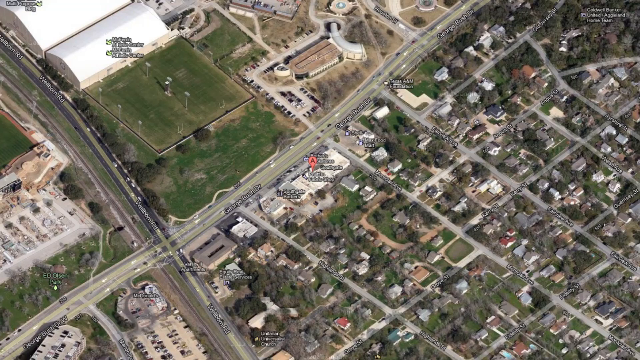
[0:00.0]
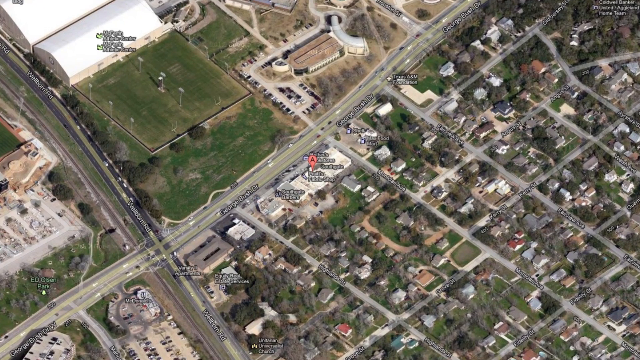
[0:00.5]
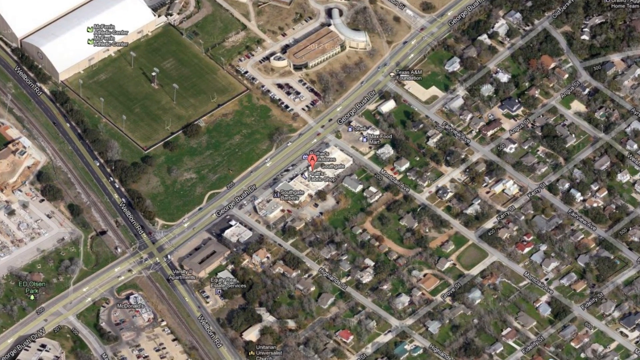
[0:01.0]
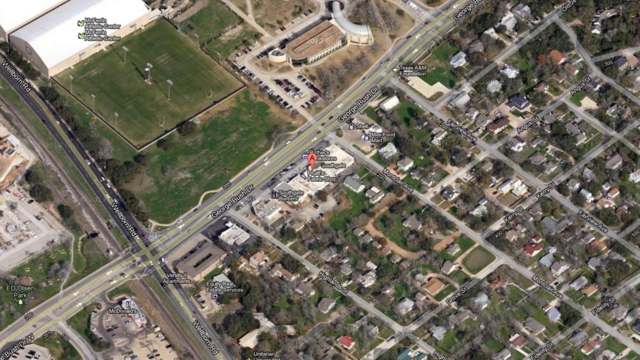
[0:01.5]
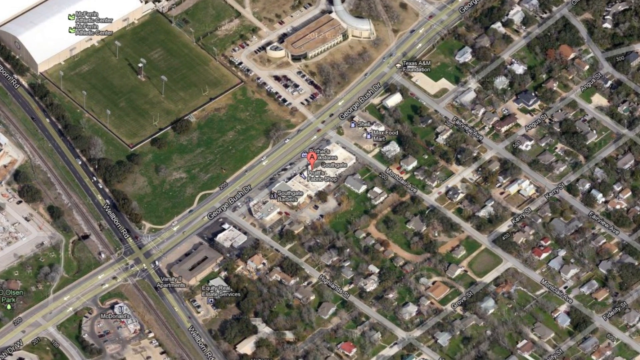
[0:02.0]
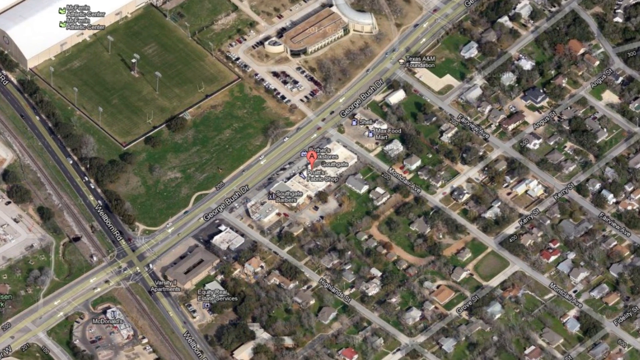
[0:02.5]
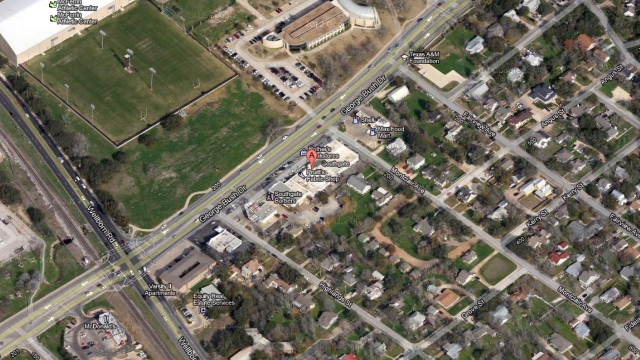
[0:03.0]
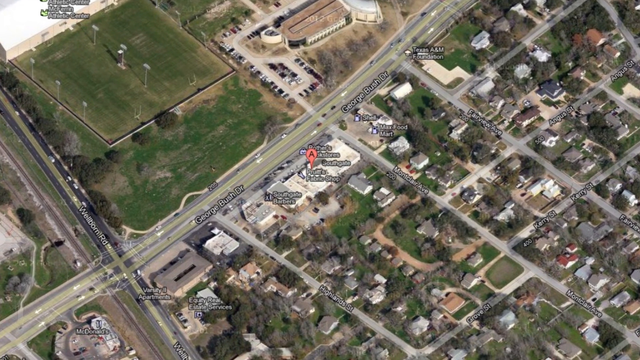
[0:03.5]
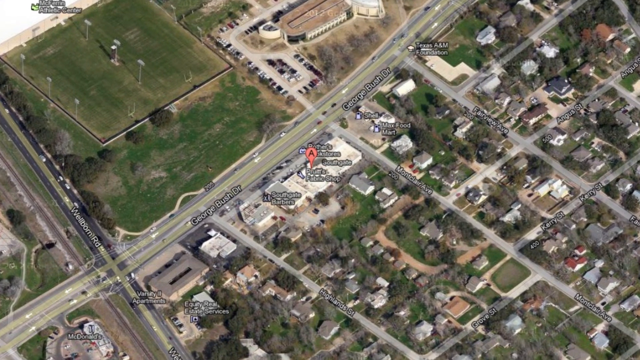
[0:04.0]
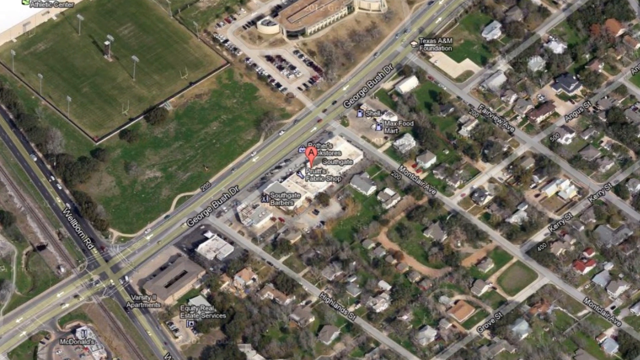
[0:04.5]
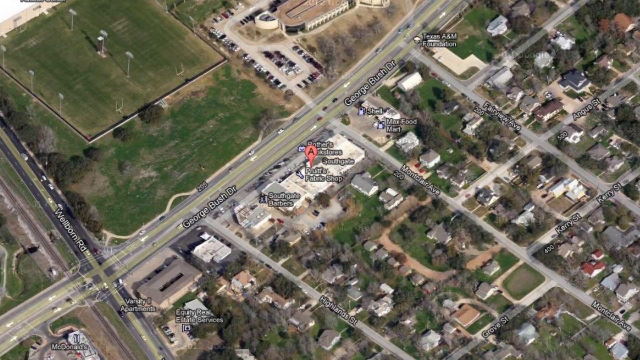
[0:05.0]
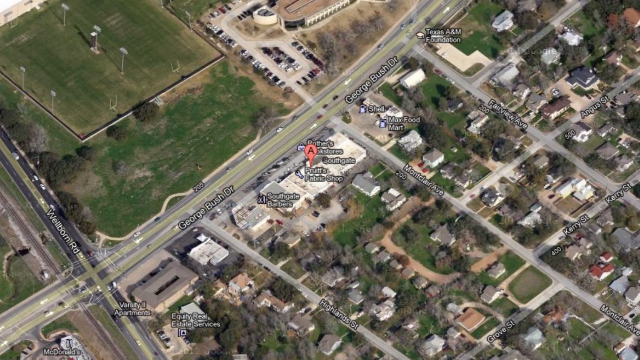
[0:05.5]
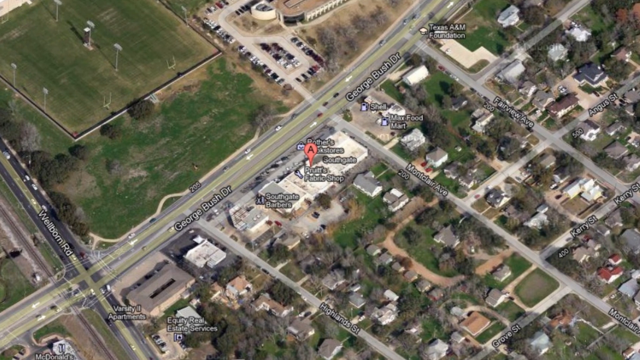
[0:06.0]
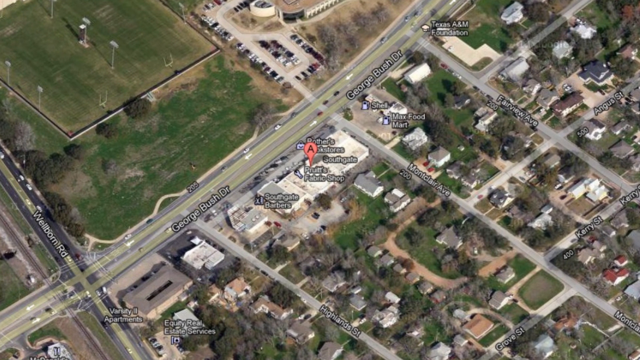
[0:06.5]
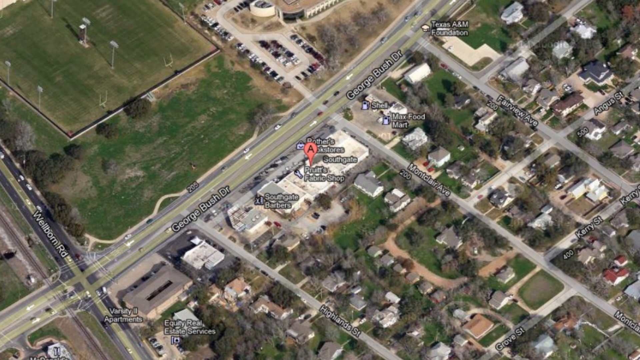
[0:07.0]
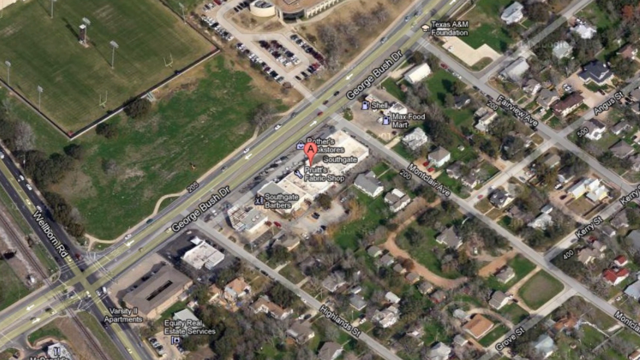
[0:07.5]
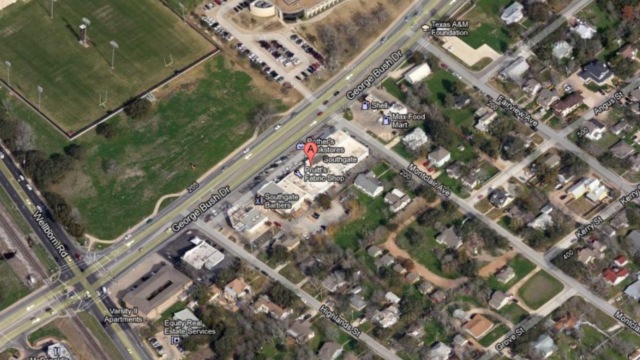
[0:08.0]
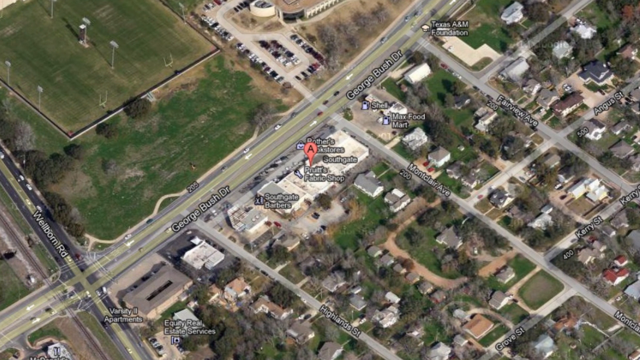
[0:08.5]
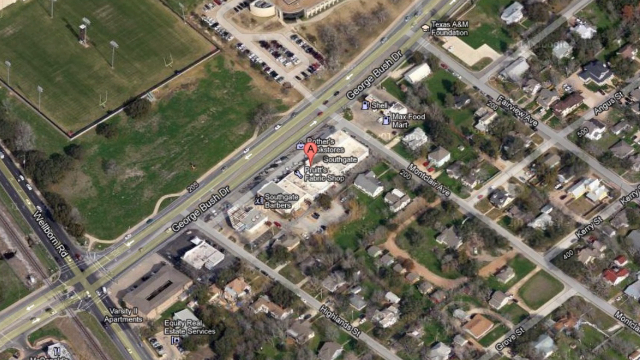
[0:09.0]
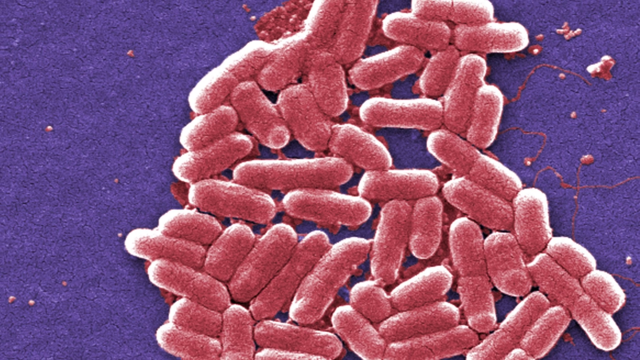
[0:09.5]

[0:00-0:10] A map is shown from a bird's eye view. There are some green fields and a few rather small streets with many buildings located around them, along with the main road, called George Bush Dr. One of the buildings next to this main road, which has a white roof, is marked with a red pin with the letter A on it. The map very slowly zooms in, as if getting closer to the building with the pin. After a while, some red particles, probably bacteria, appear in the middle of the screen on a purple background.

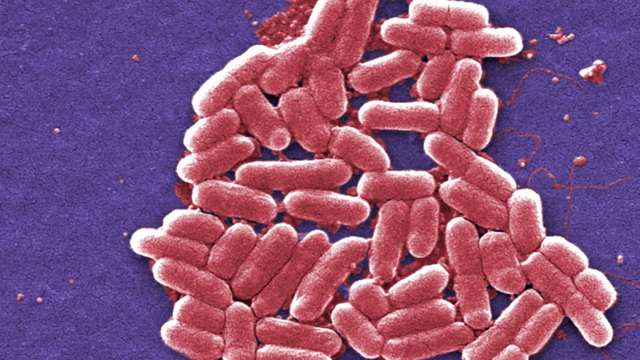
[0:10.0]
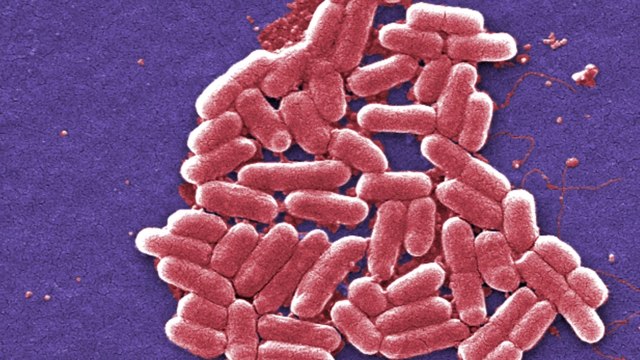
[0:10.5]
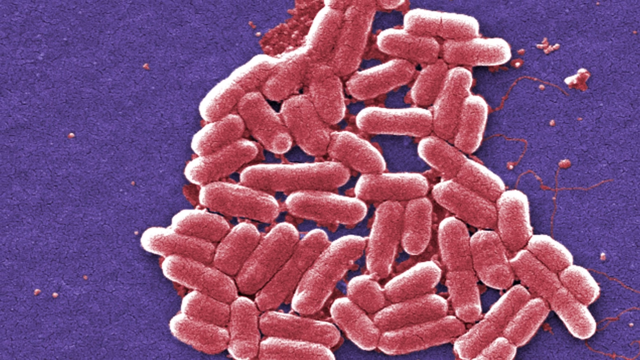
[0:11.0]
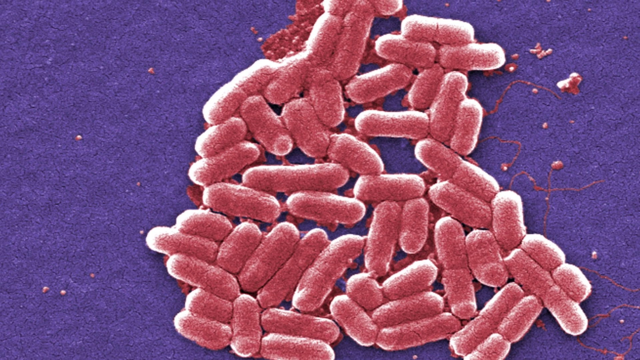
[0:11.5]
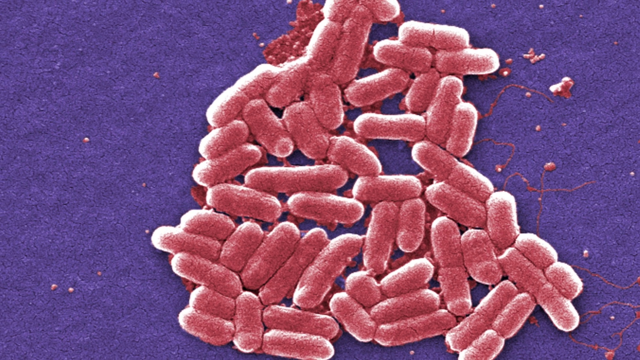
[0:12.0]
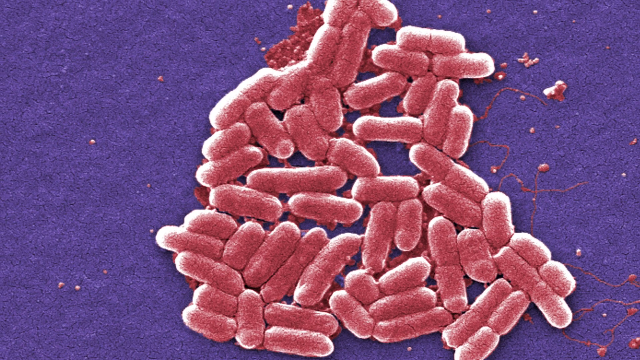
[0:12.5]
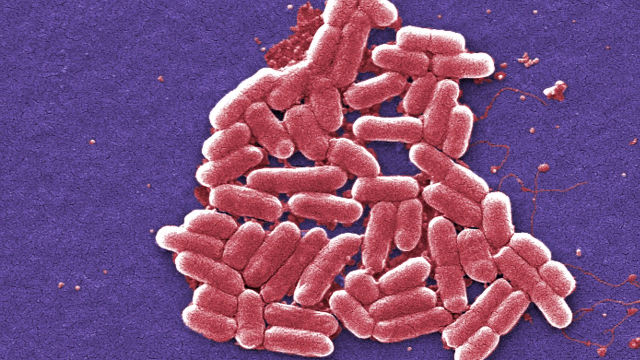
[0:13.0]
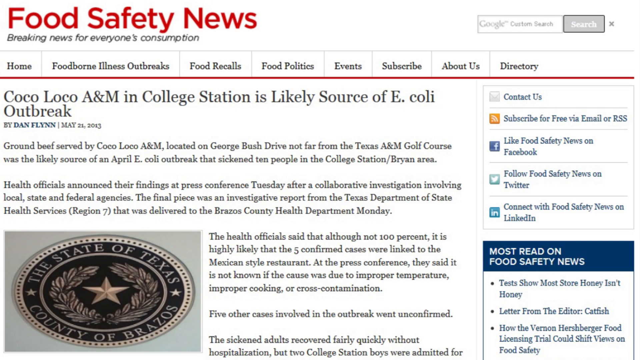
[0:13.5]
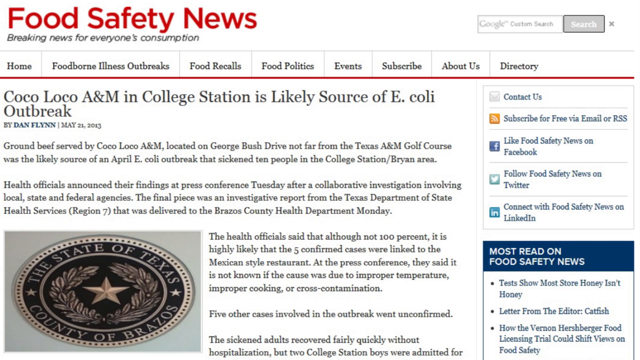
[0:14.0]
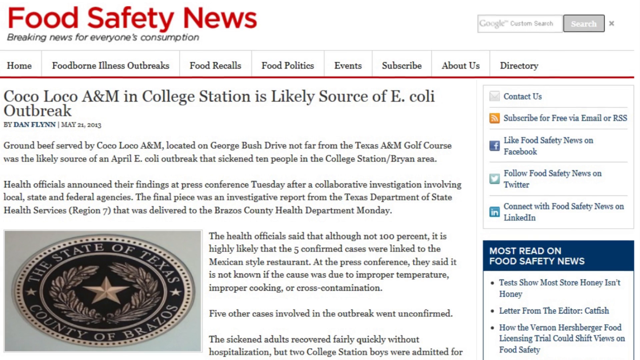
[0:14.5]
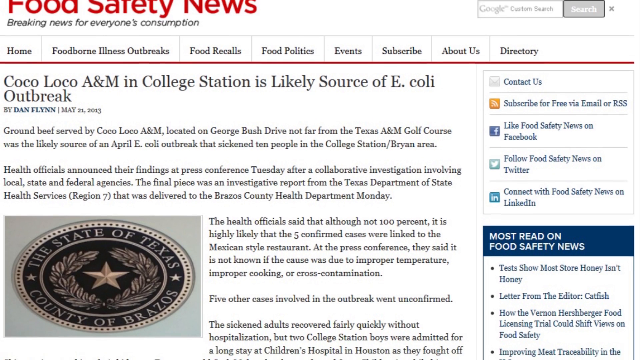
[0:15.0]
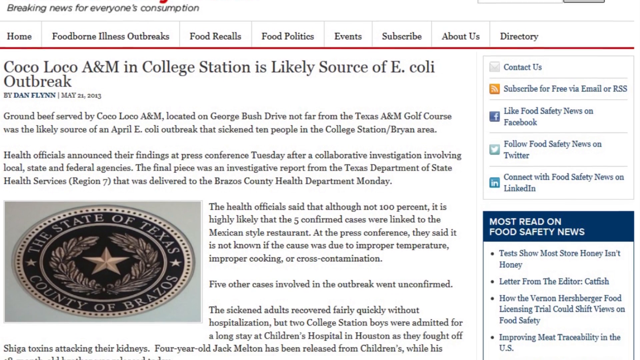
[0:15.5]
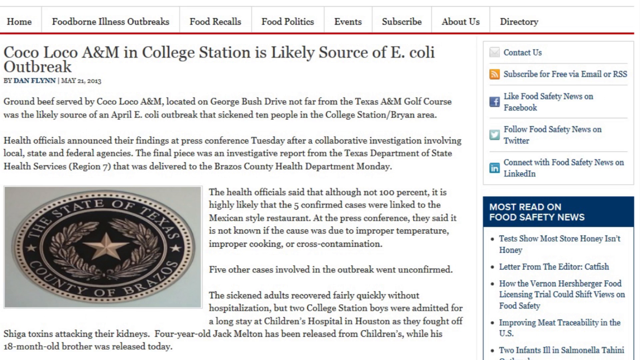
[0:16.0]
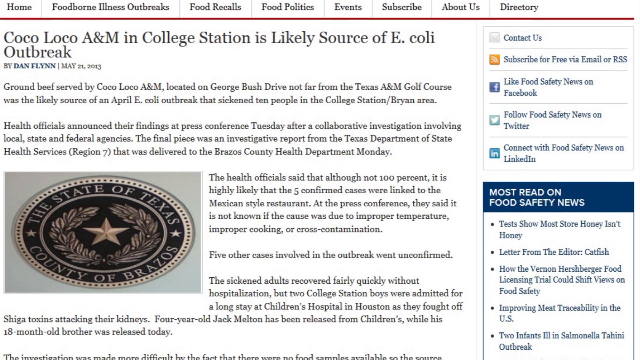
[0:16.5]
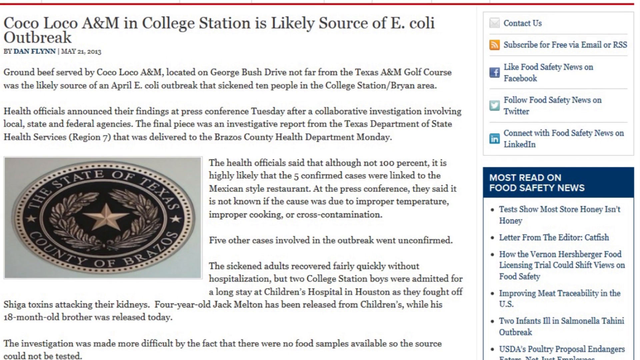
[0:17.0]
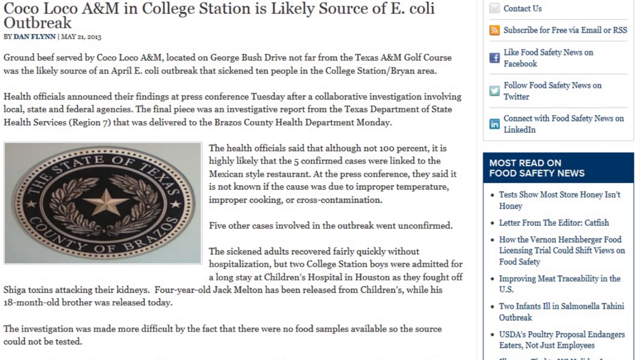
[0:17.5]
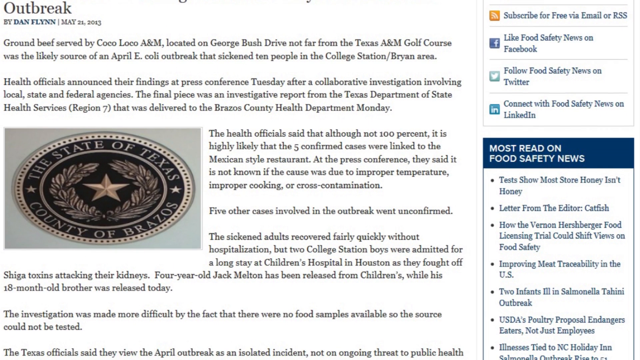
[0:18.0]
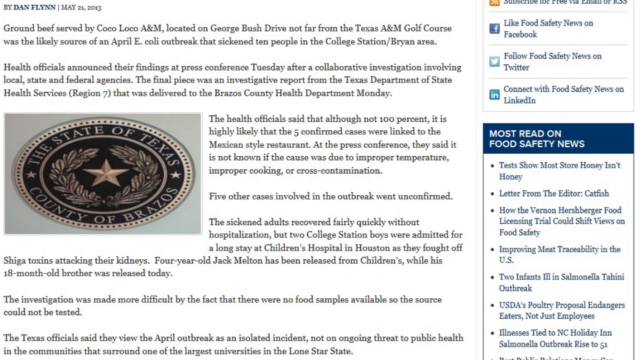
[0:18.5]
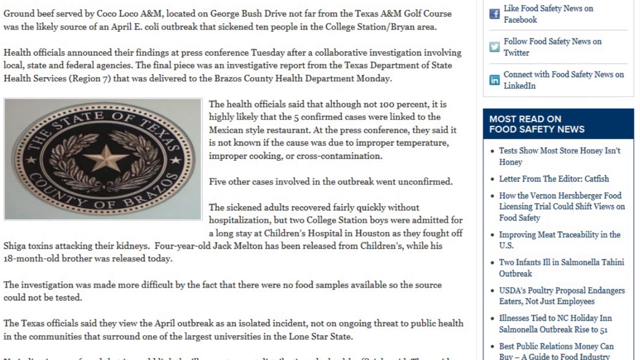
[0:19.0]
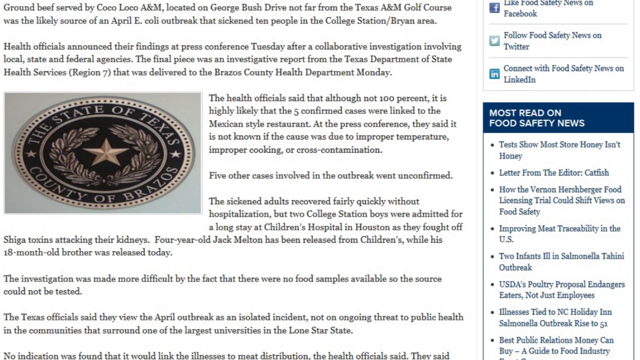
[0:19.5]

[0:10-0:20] Red particles that look a bit like bacteria are in the middle of the screen on a purple background, and the image slowly zooms out. After a while it switches to a website called Food Safety News, shown in big red letters at the top. Below it there is a website menu and the article title "Coco Loco A&M in College Station is likely source of E.coli outbreak". The website slowly slides down, showing the main body of the article and an image of a Texas badge with the words "the state of Texas, country of Brazos" on it. The image is aligned to the left.